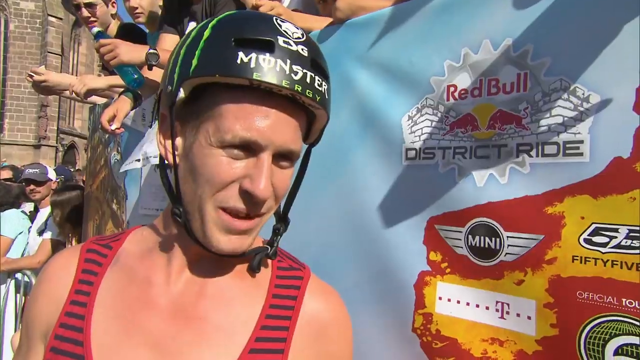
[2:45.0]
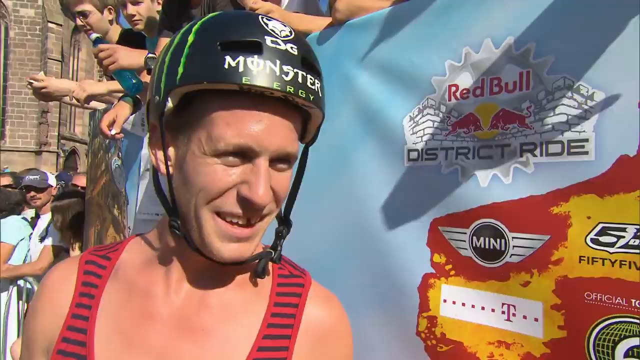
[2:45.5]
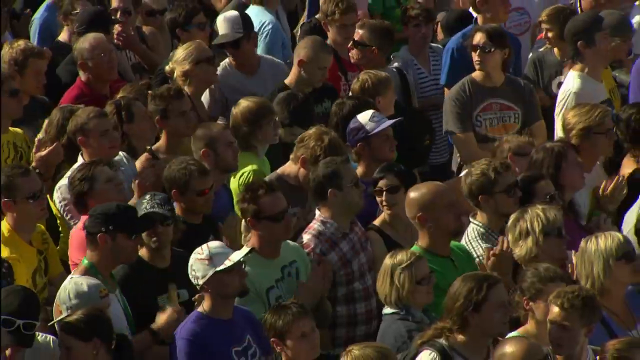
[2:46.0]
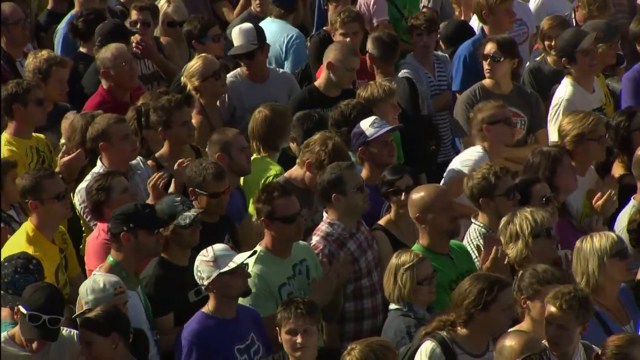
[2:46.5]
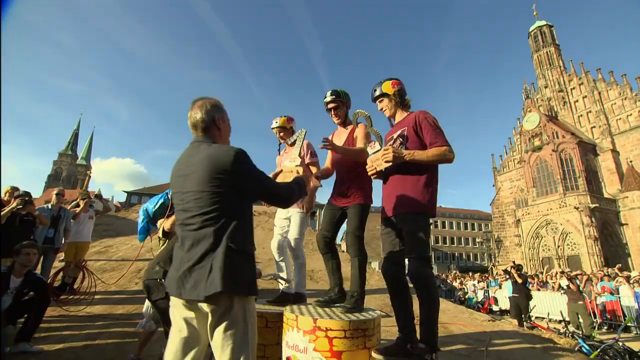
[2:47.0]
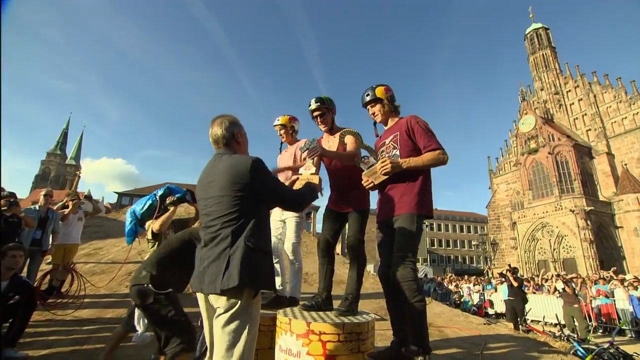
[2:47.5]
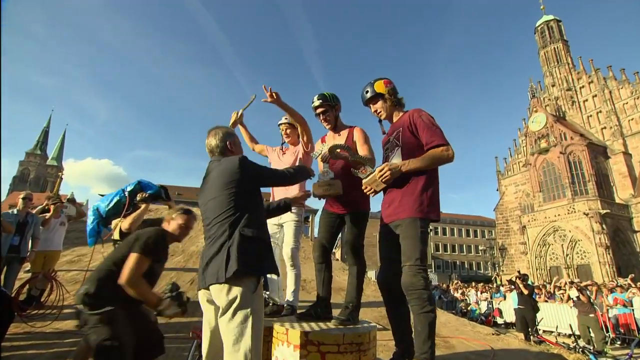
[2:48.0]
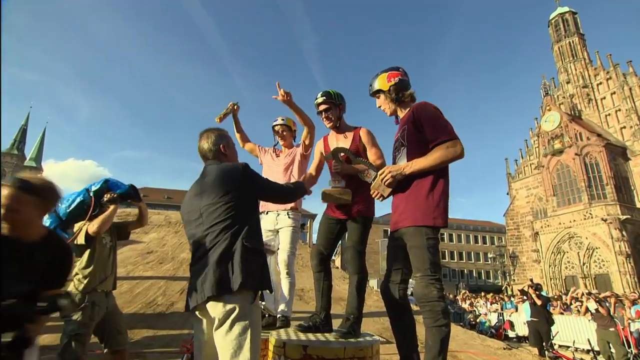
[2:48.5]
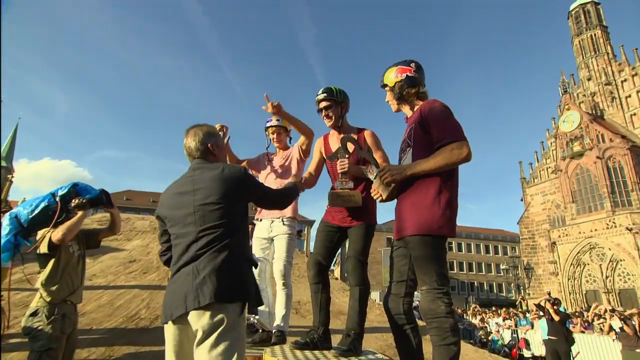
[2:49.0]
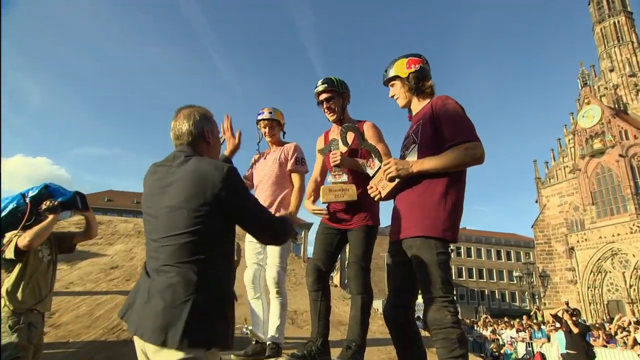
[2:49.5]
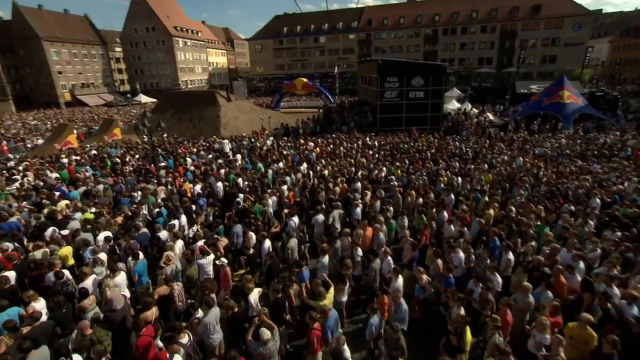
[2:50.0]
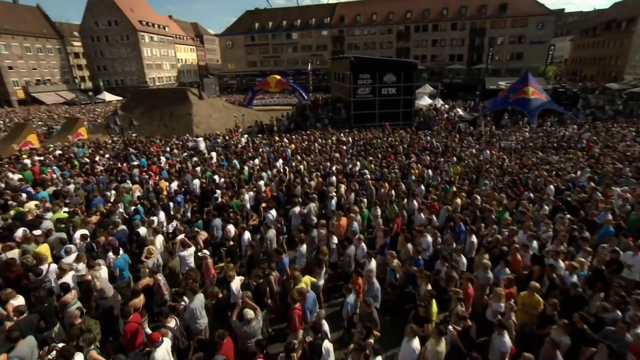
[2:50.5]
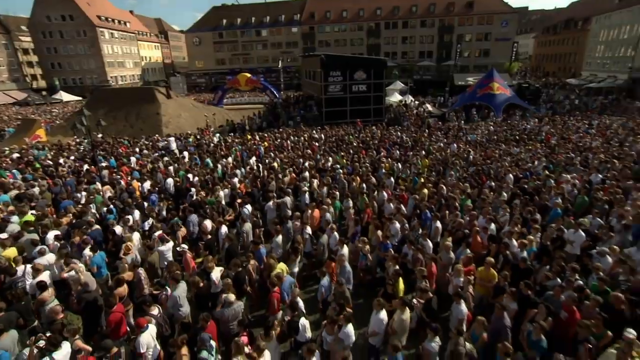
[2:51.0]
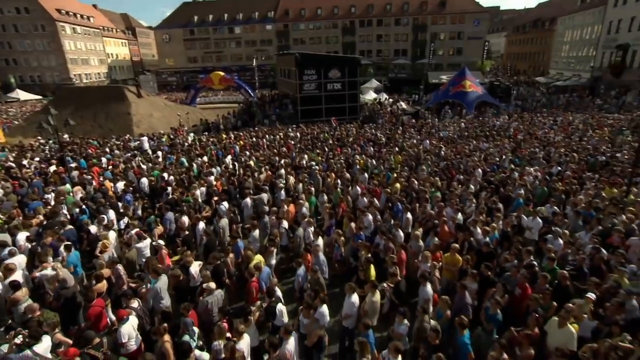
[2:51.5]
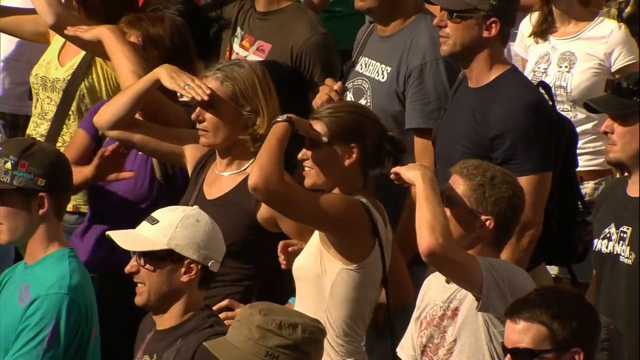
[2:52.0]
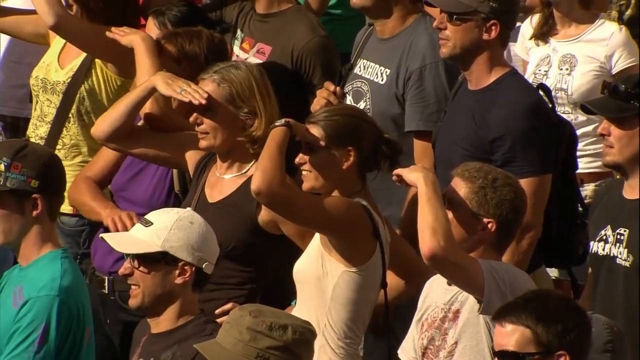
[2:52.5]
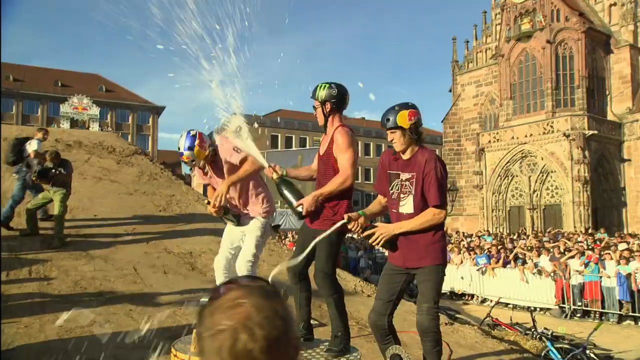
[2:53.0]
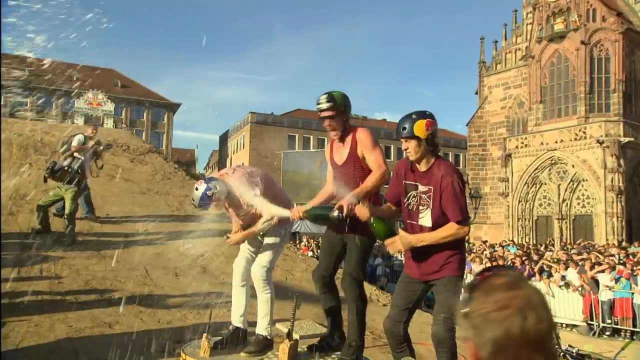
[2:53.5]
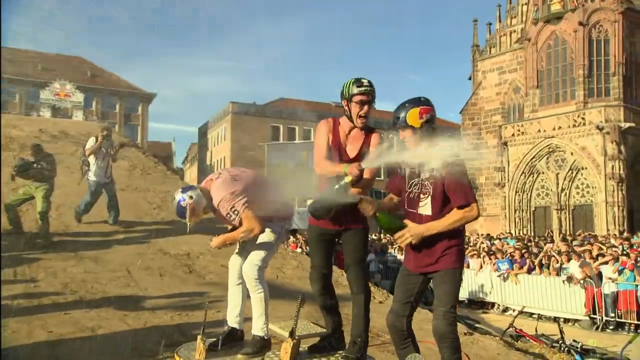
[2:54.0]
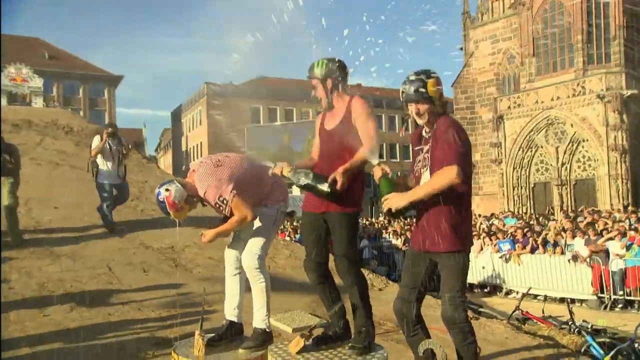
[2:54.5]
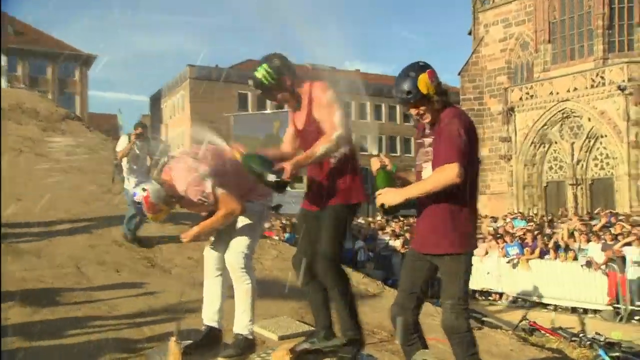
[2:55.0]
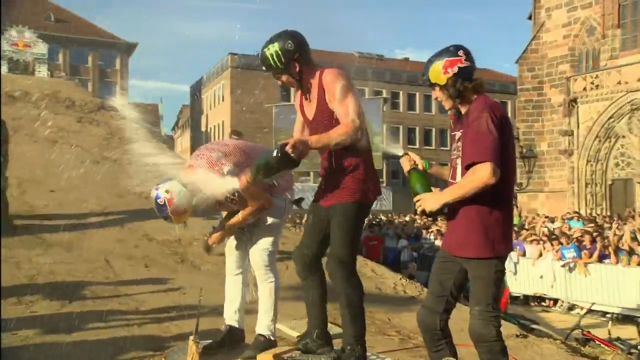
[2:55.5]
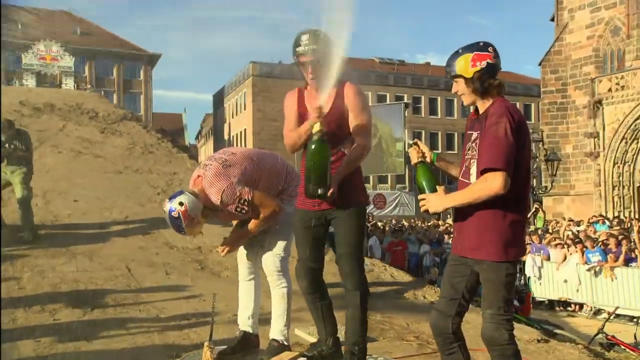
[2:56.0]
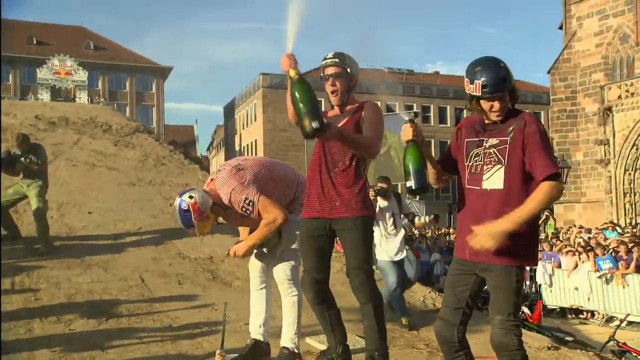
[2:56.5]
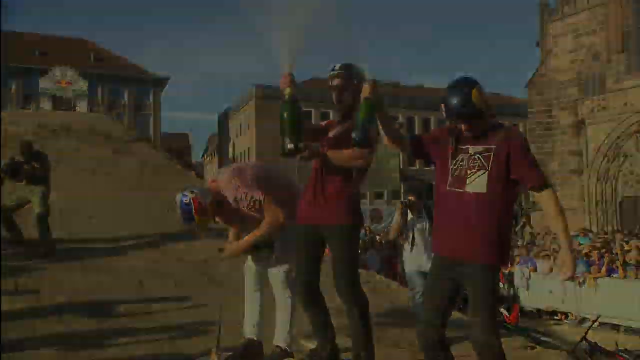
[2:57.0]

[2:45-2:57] Awards are given to a group of team members who have won first place in the extreme bicycle event. Standing on a podium, they are handed champagne and spray it on each other in celebration, cheered on by a very large crowd. All three participants wear helmets, dark jeans and knee pads; only one wears sunglasses. Photographers run through the background trying to get video and pictures. The man giving the award wears a suit coat and dress pants. A large city with tall, kind of old brick buildings and maybe a few churches forms the backdrop of the ceremony.